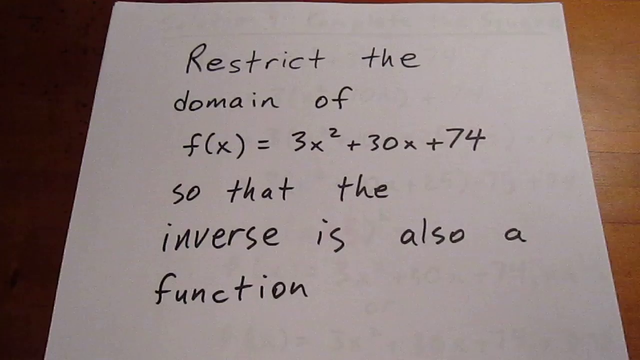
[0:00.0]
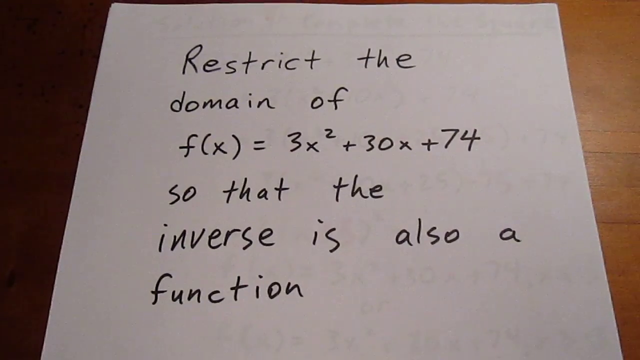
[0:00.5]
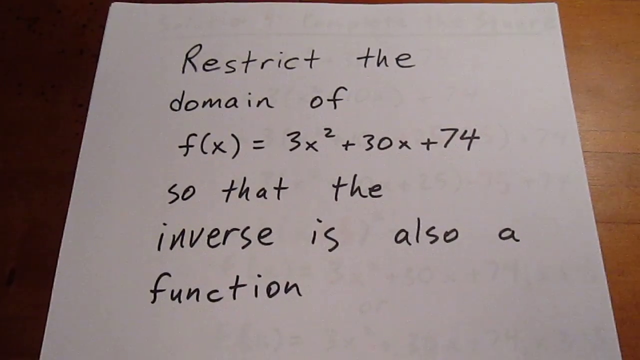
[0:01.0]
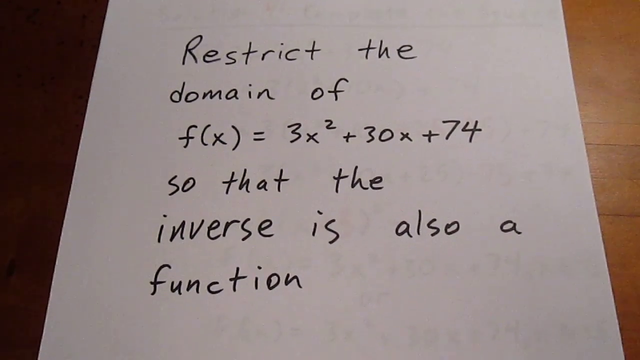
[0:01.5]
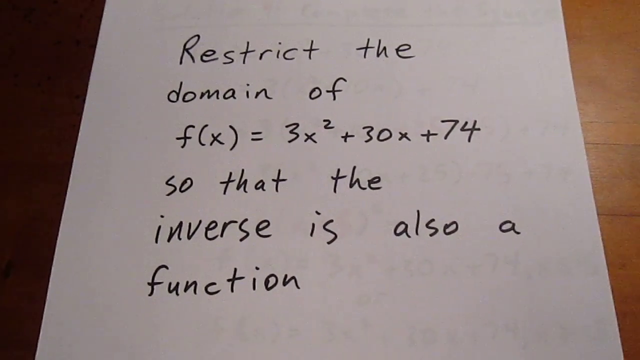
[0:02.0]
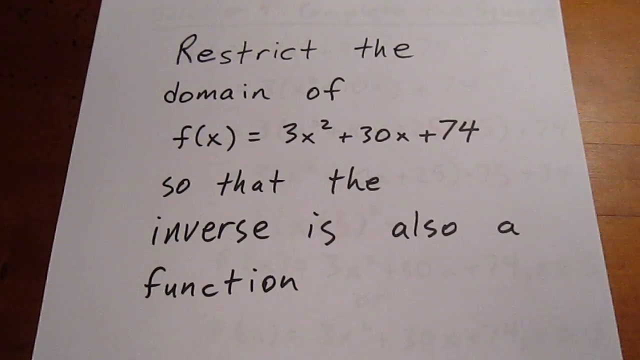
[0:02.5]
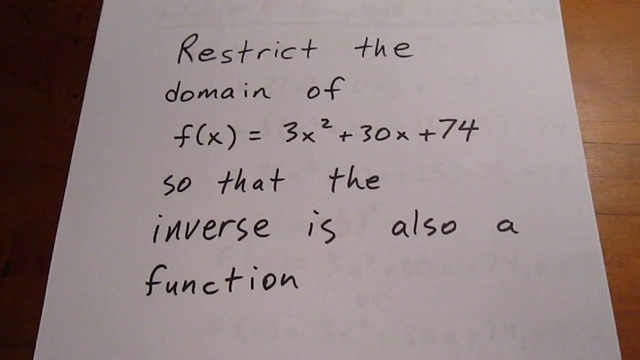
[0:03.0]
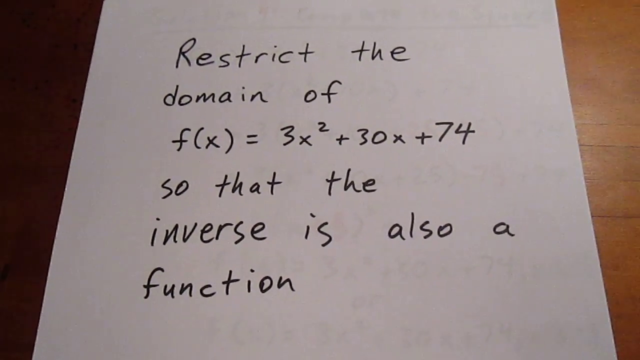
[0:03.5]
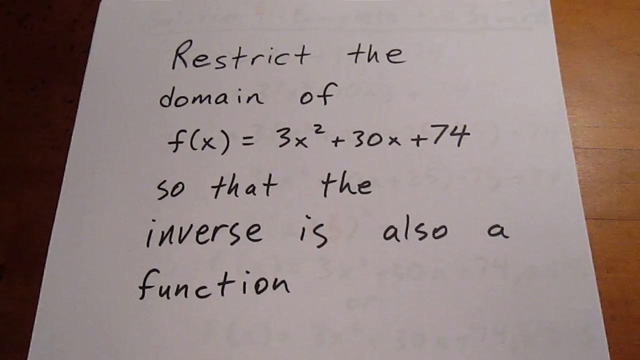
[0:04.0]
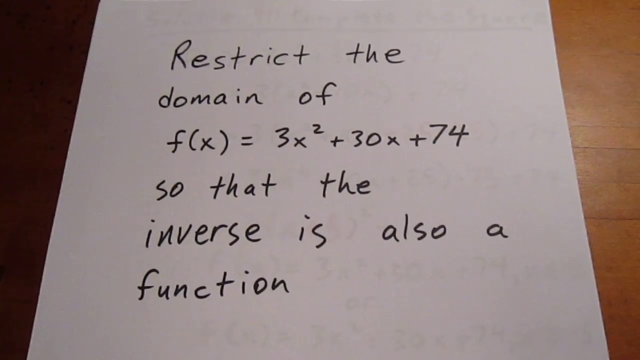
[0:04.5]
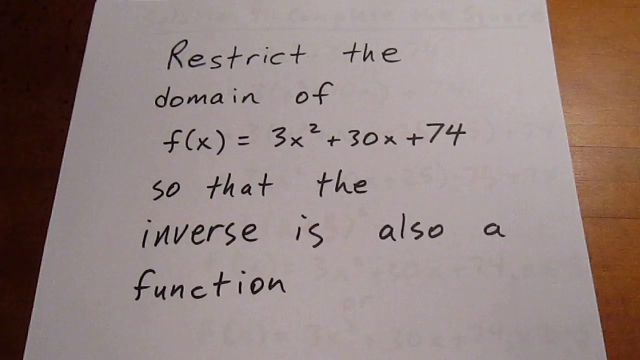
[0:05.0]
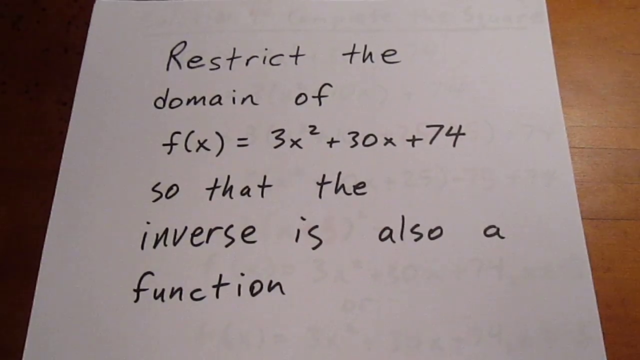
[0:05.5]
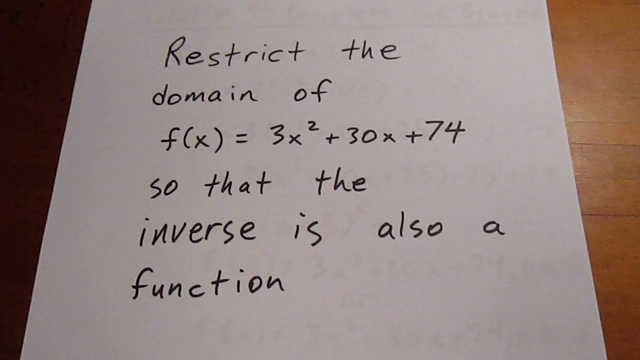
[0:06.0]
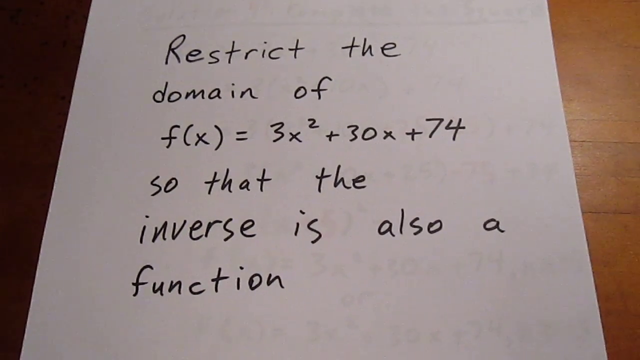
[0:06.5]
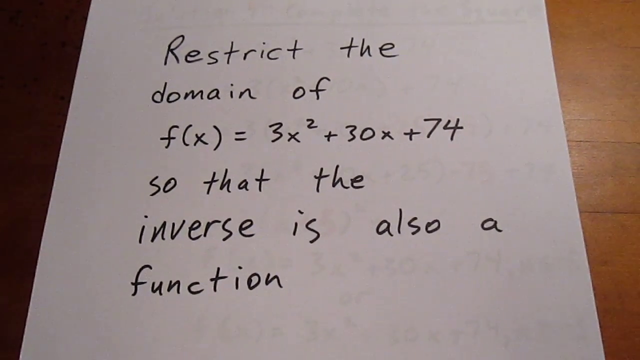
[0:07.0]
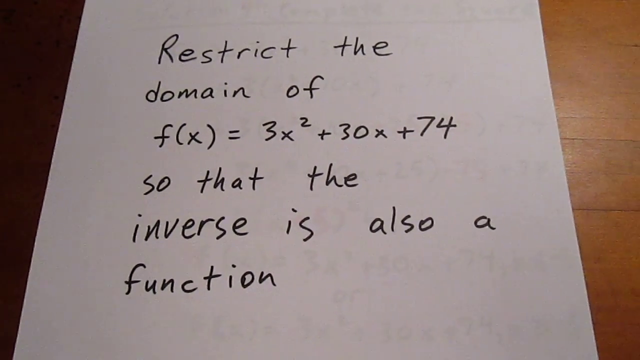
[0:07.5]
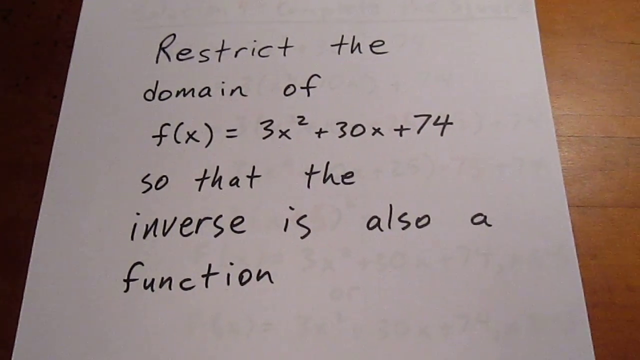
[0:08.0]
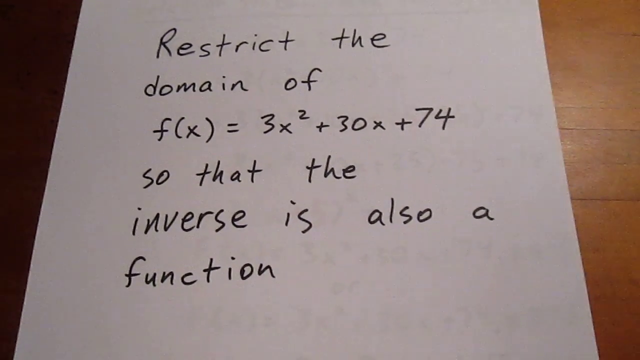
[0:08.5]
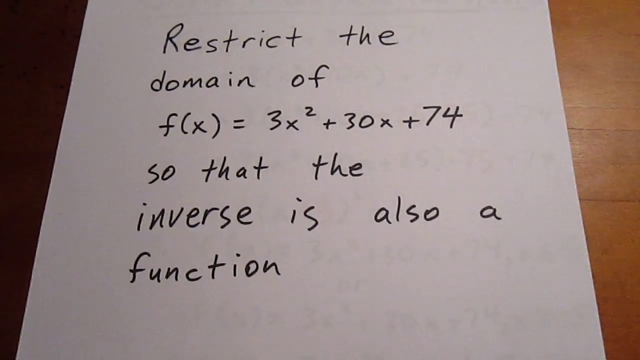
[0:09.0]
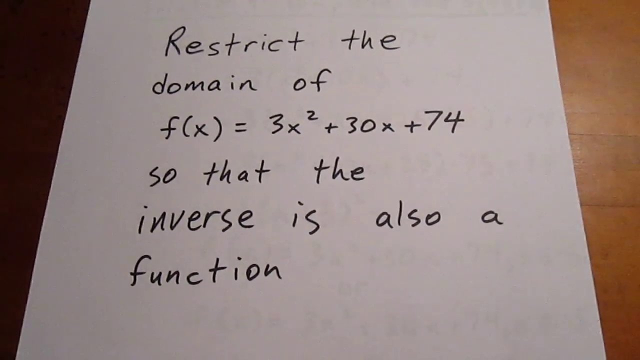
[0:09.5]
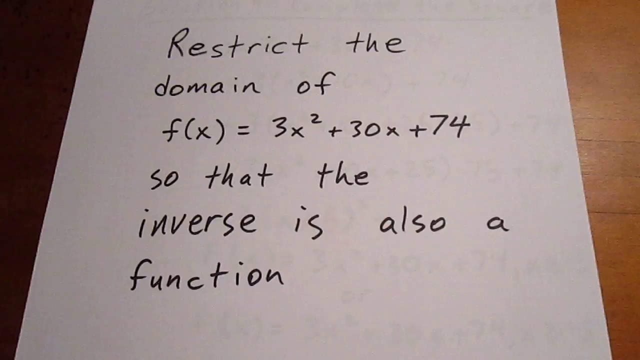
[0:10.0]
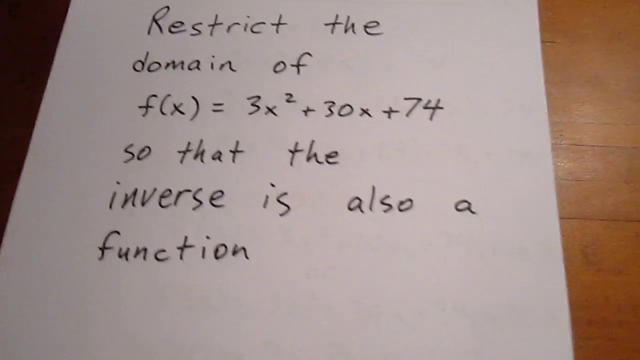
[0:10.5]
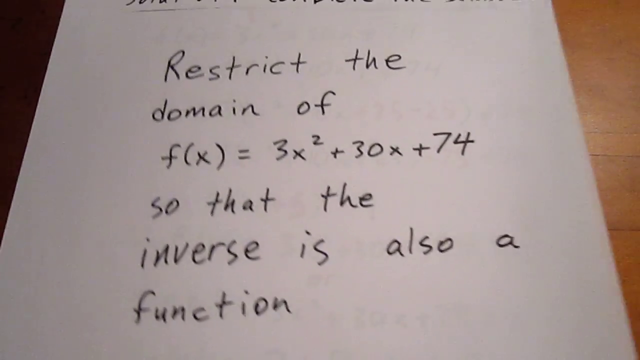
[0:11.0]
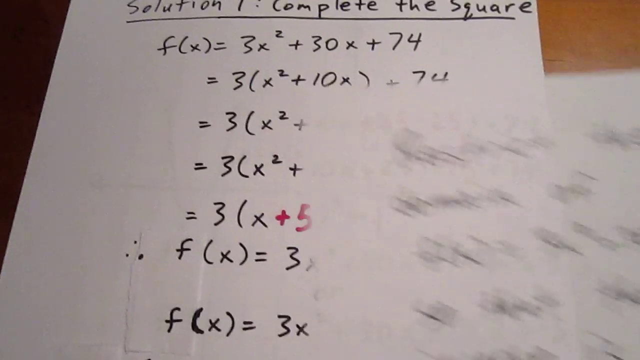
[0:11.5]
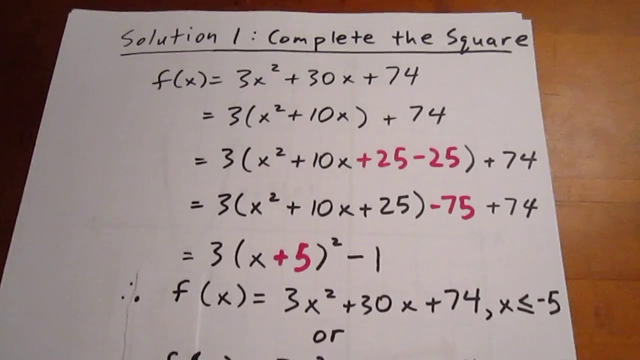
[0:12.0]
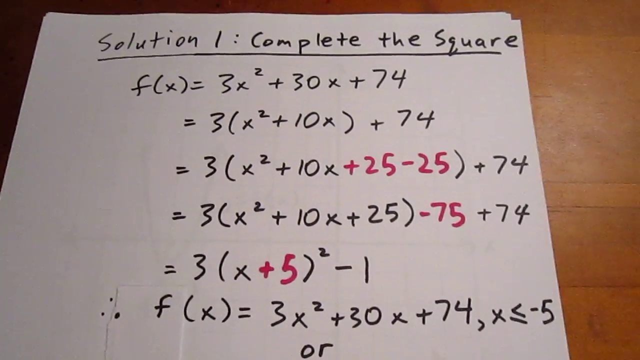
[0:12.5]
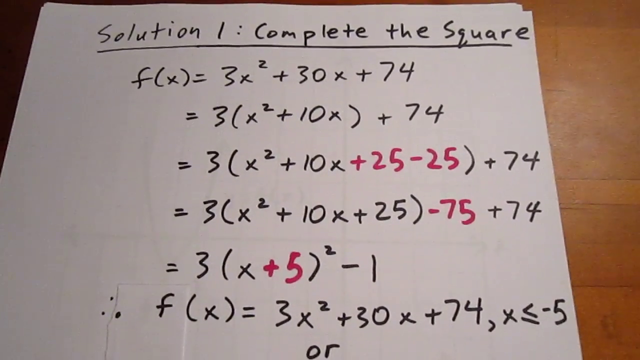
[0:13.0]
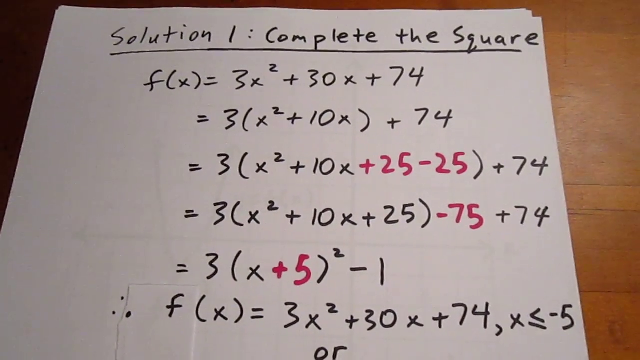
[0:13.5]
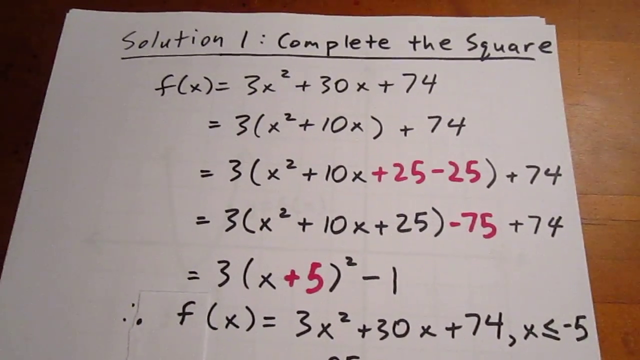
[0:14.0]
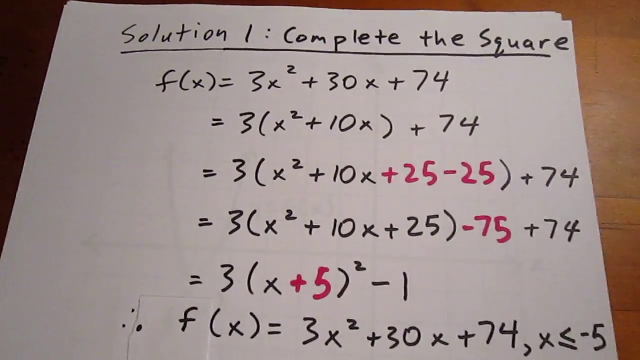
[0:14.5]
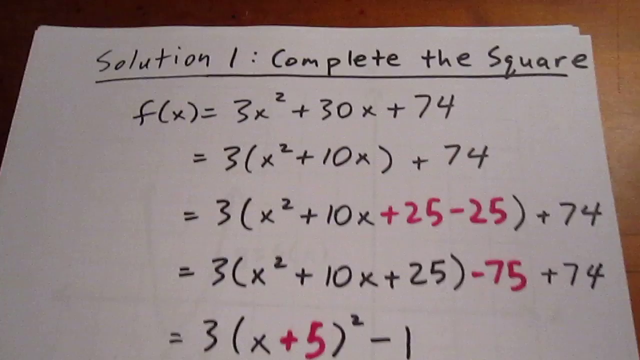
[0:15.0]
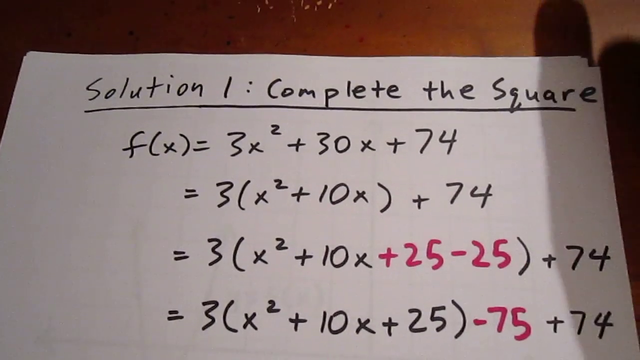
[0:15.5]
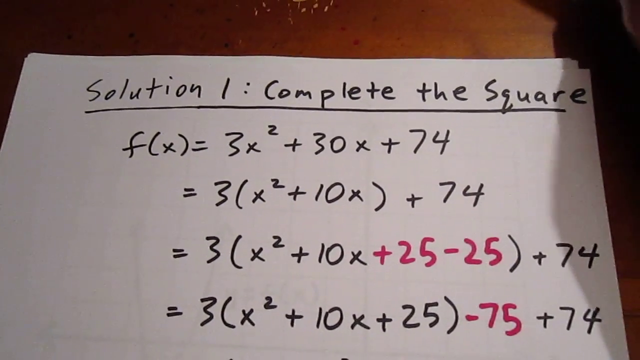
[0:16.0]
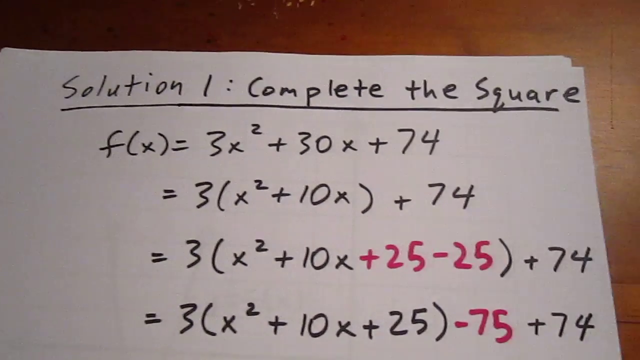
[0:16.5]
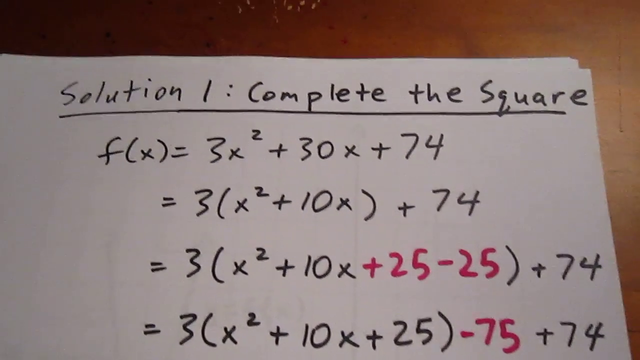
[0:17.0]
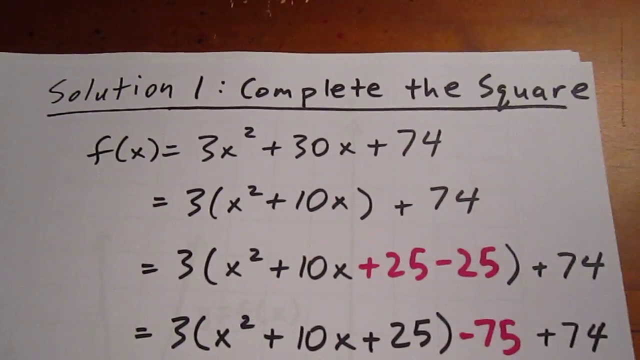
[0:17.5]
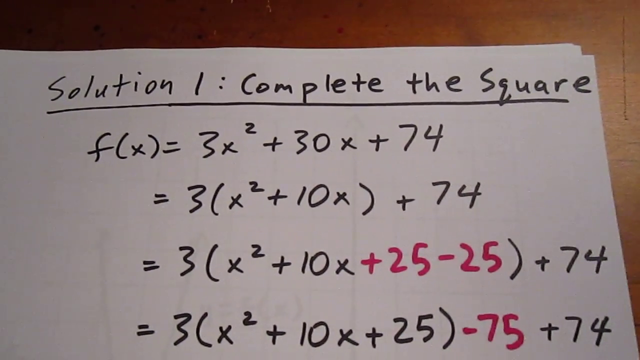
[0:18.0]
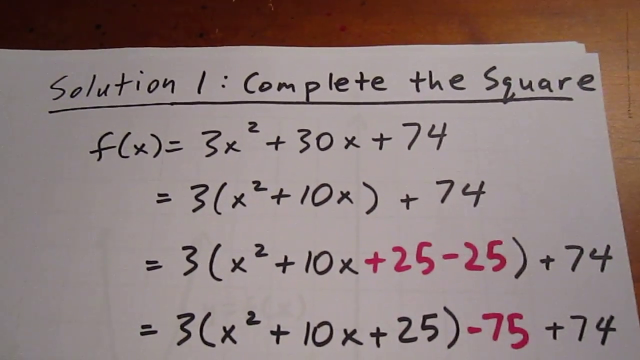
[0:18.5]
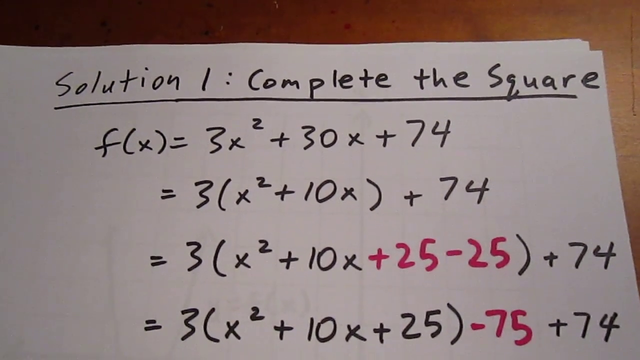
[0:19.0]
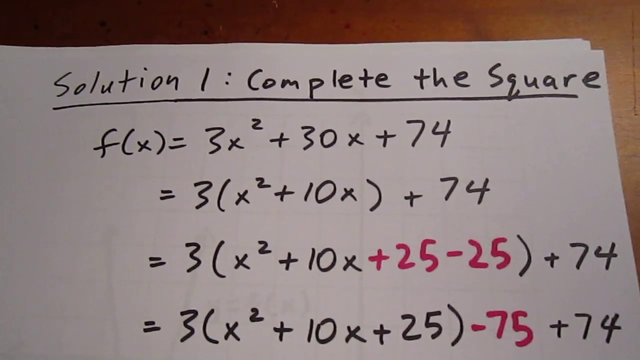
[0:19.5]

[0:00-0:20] A handwritten mathematical equation, which looks like a quadratic equation, is shown on a sheet of paper with no lines or margin, written in black ink, perhaps with a felt pen. It reads: restrict the domain of f(x) = 3x² + 30x + 74 so that the inverse is also a function. The camera moves slightly. The white sheet of paper appears to be on a wooden desk, with the camera looking down on it at a slight angle. The sheet is removed, revealing the solution below, handwritten in felt pen: "solution 1: complete the square." The lines read f(x) = 3x² + 30x + 74, then 3(x² + 10x) + 74, then = 3(x² + 10x + 25 − 25) + 74, and the final line so far is 3(x² + 10x + 25) − 75 + 74.